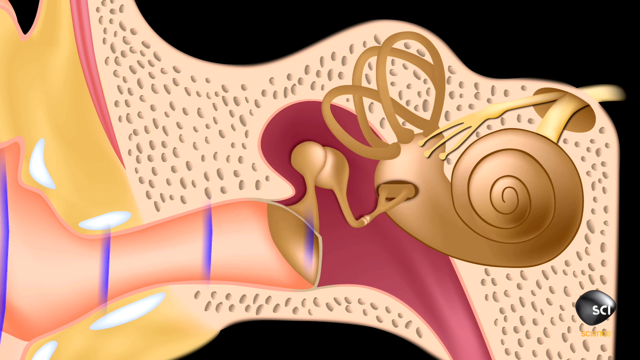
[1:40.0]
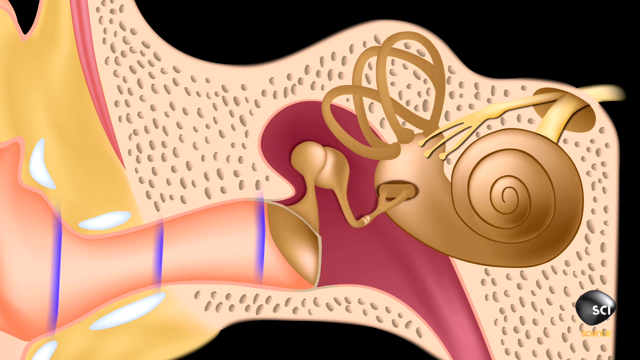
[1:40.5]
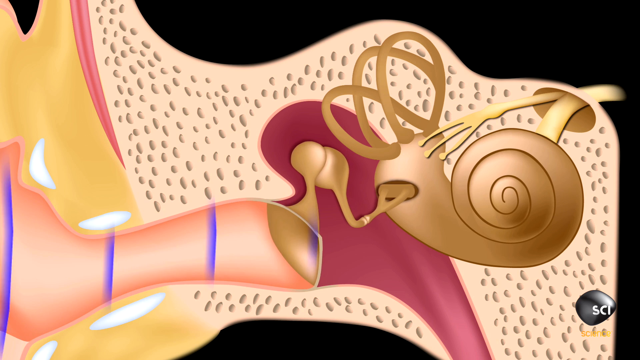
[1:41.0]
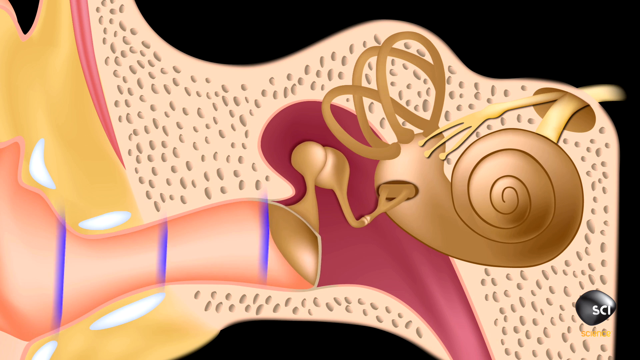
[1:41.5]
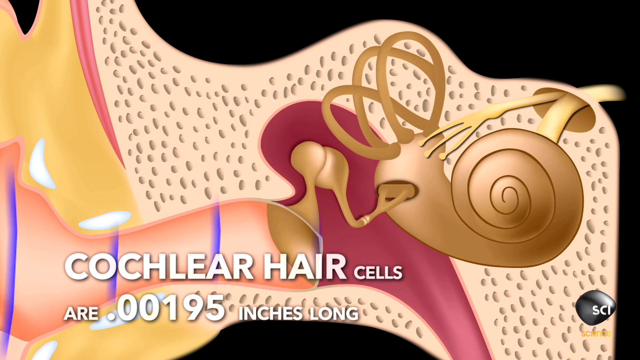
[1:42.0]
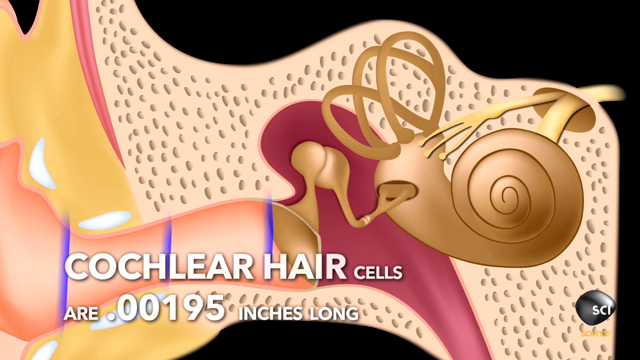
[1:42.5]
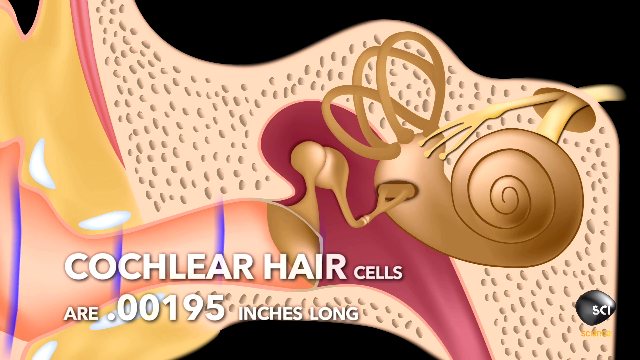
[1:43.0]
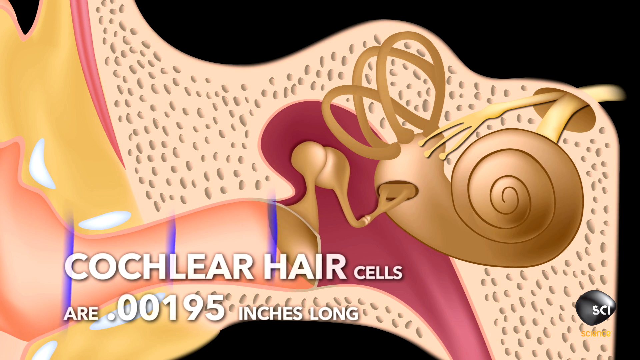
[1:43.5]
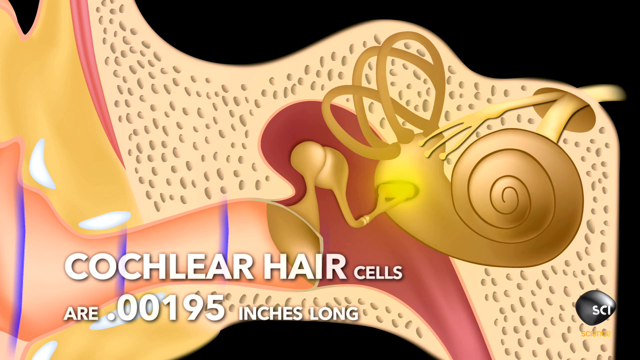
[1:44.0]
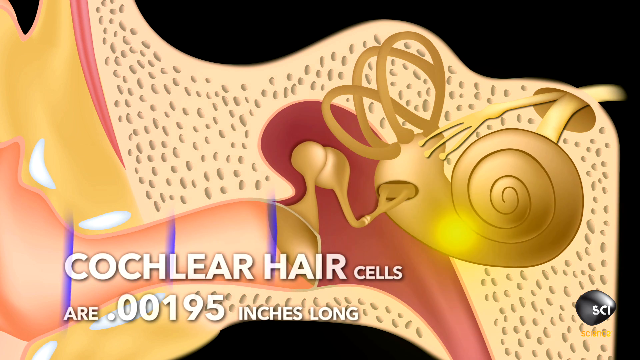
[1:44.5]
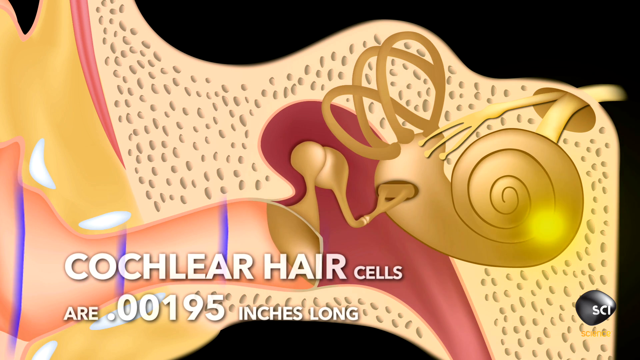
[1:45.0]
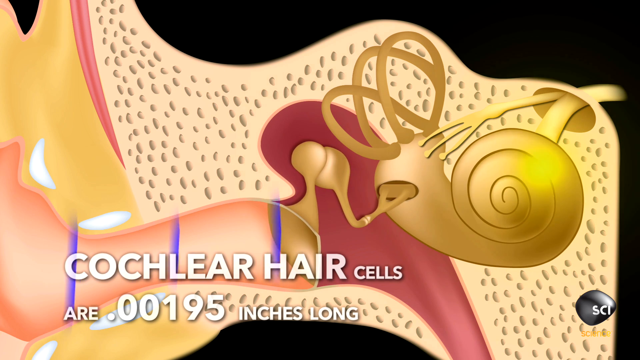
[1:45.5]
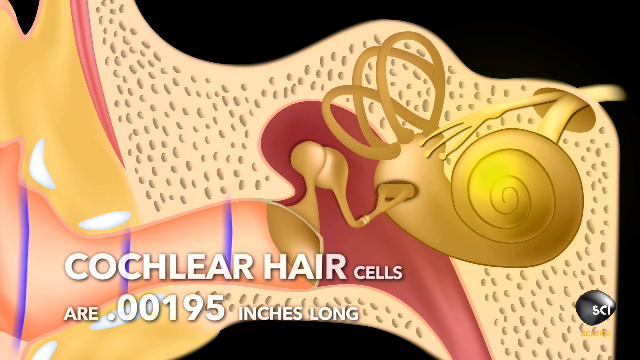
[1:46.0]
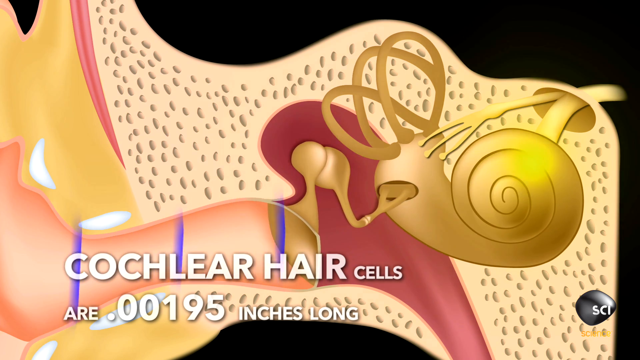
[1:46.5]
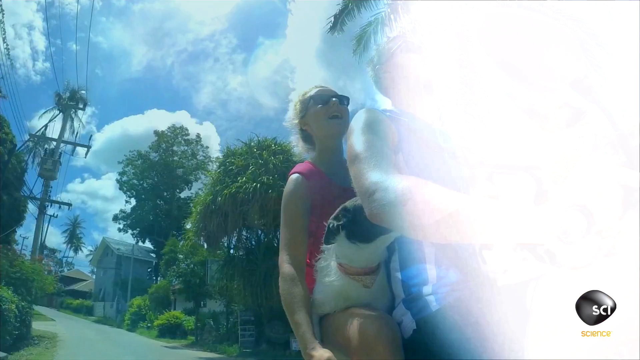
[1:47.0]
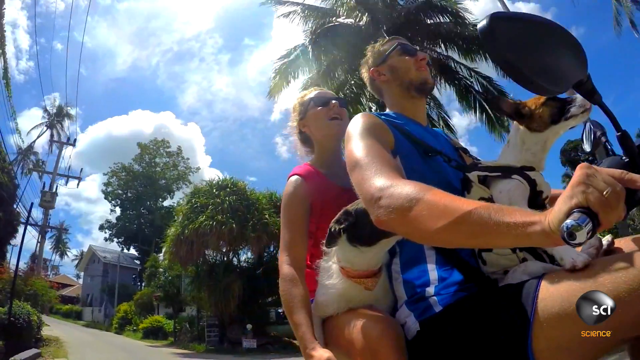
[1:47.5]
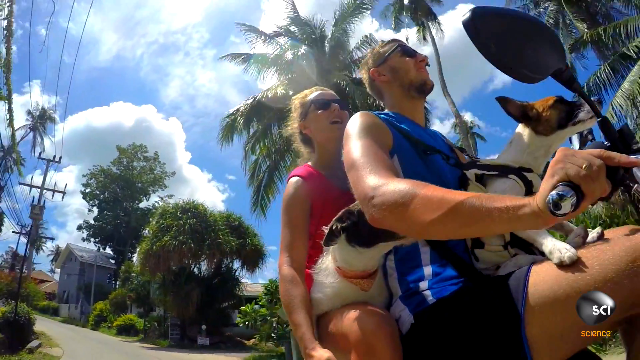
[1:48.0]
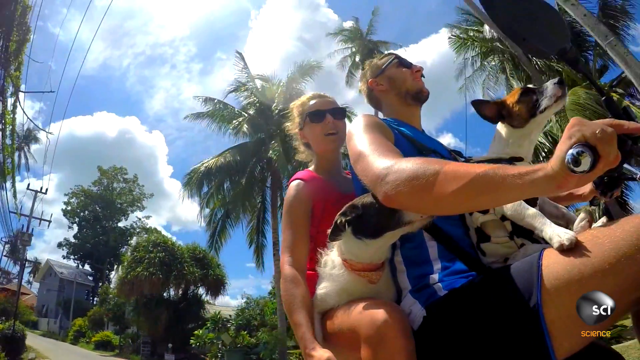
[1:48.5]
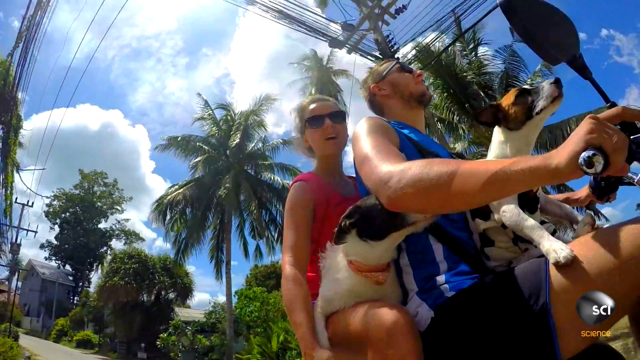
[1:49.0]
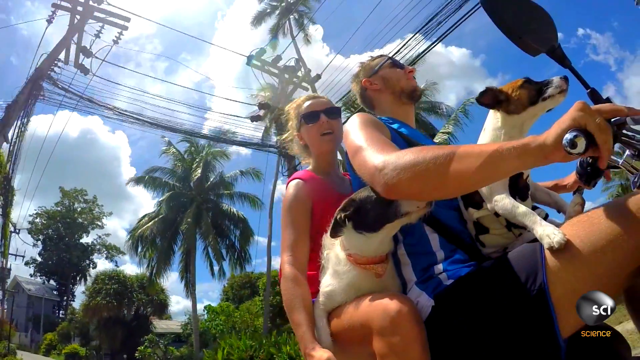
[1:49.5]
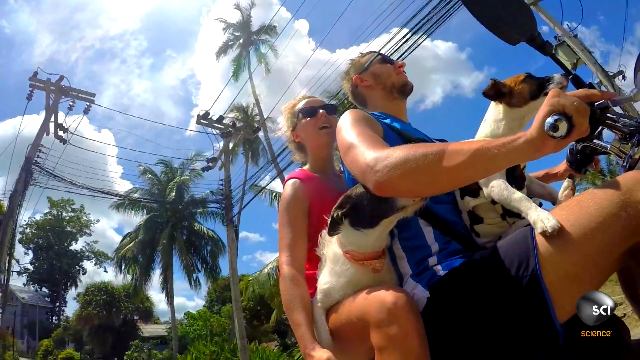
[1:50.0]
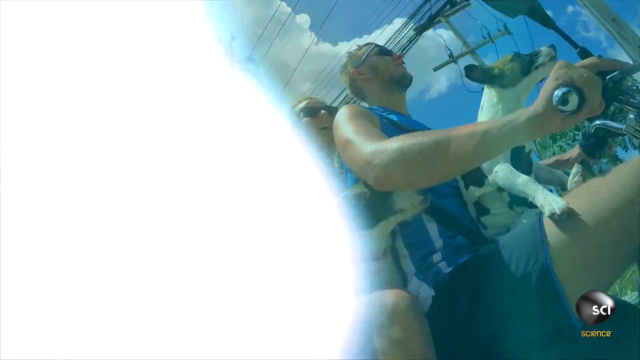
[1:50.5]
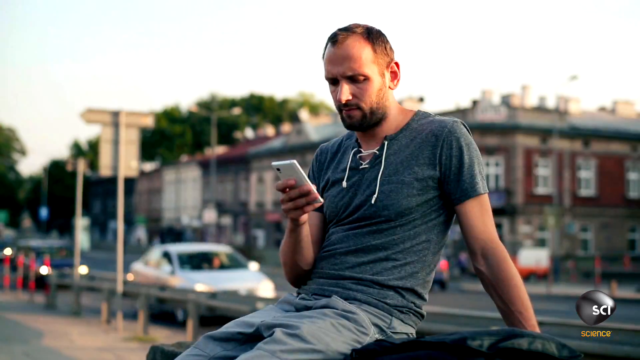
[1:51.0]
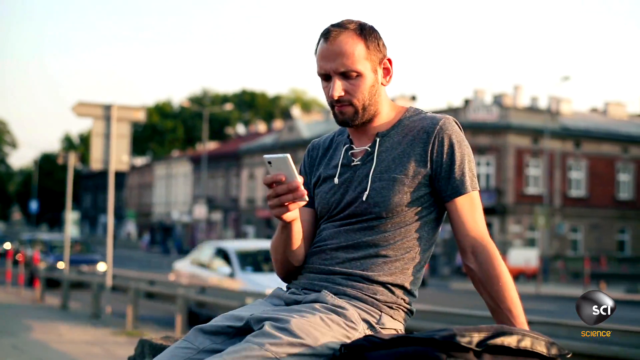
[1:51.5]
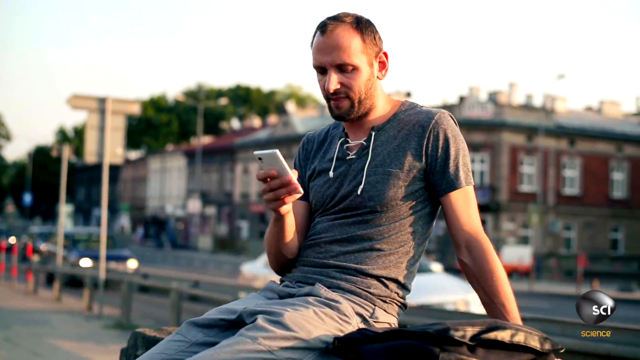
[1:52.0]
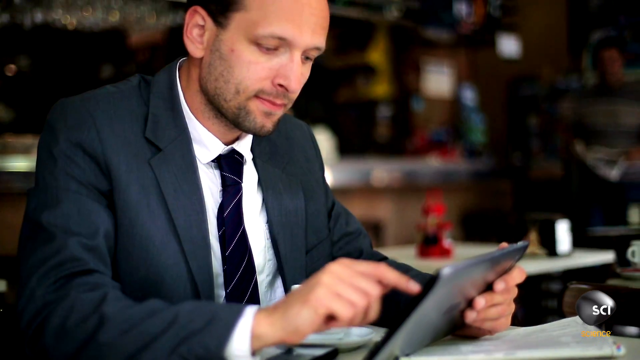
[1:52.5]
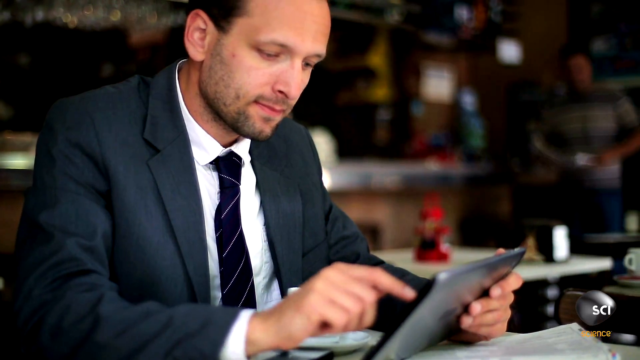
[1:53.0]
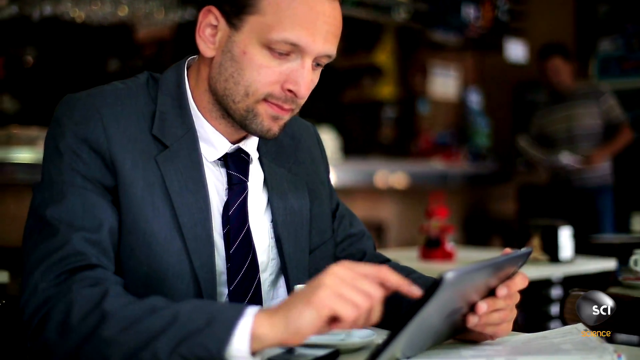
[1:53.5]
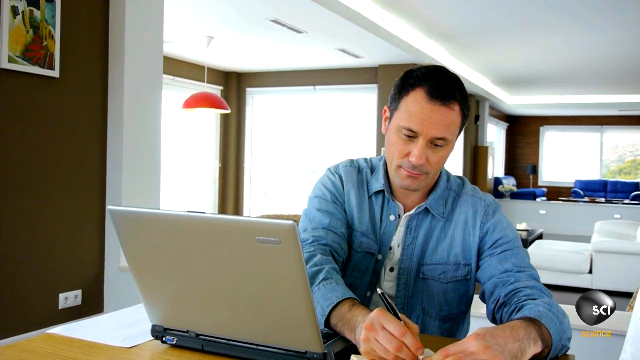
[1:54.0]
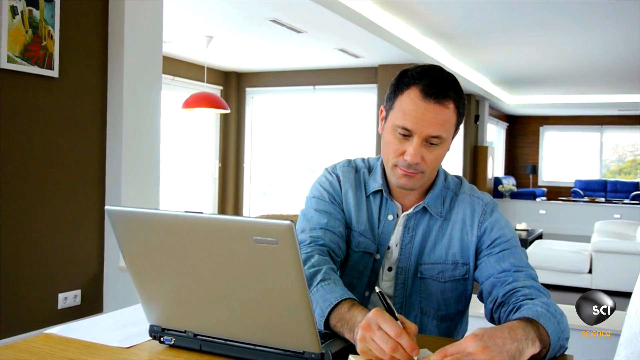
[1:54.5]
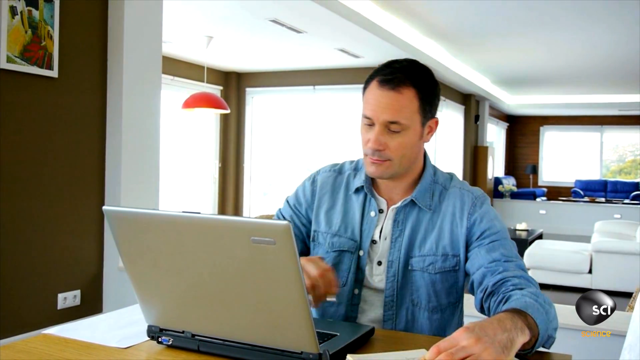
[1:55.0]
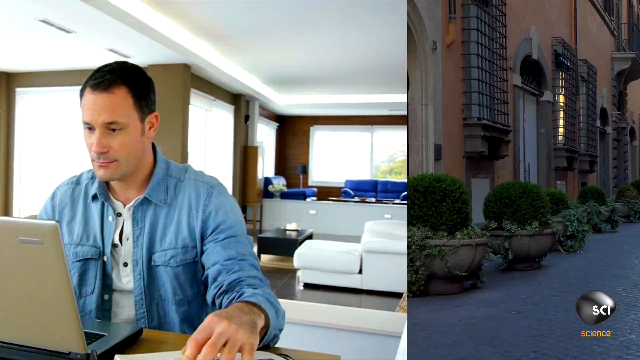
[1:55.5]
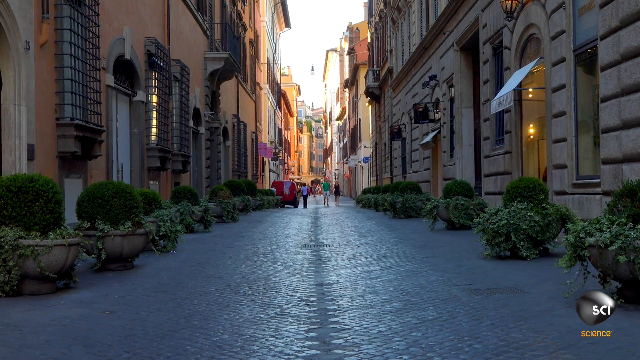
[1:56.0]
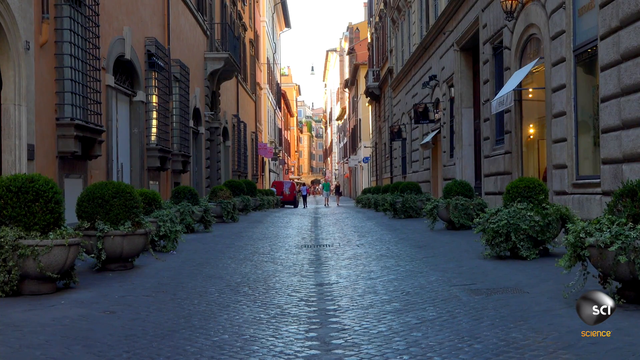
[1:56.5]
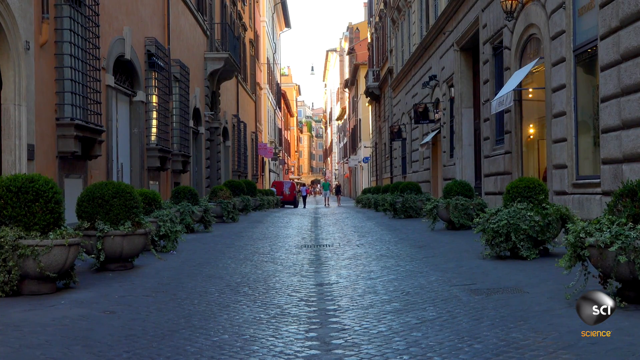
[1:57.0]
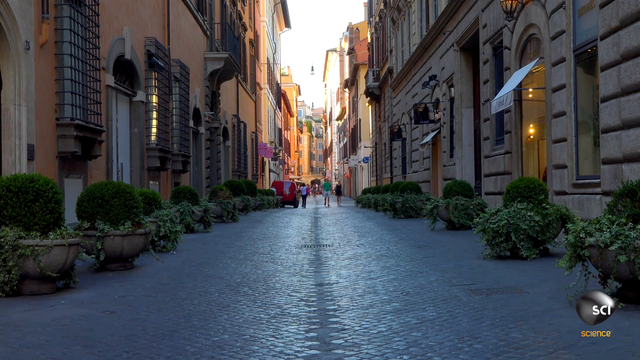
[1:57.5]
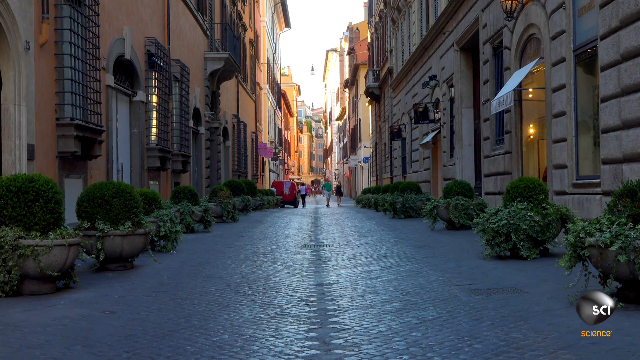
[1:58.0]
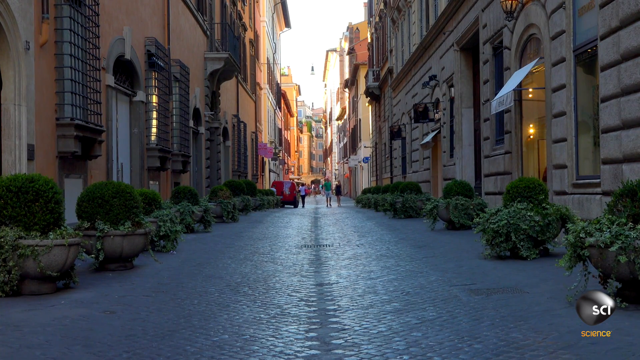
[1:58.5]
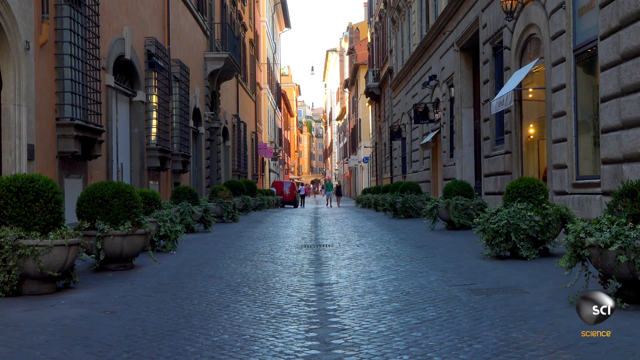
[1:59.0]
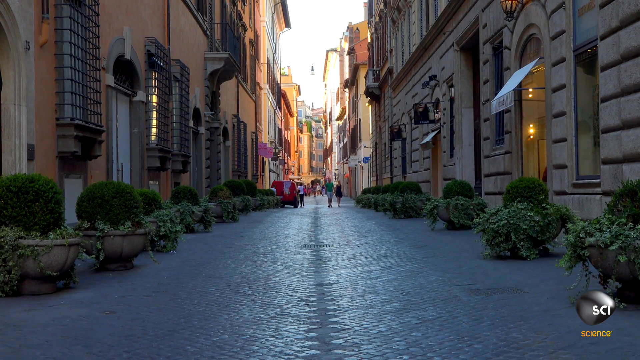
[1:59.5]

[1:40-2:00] A graphic reads "cochlear hair cells are 0.00195 inches long." Then live action returns with fast cuts: people riding a motorcycle with two dogs on their lap and no helmets, a guy sitting outside on a phone, a guy on a tablet, a guy on a laptop, a person sitting at a desk, men in suits or in a denim shirt, and a city that looks European, with a cobblestone street and red roofs. The cobblestone street is pretty empty, with only small people far in the background. No one wears headphones.